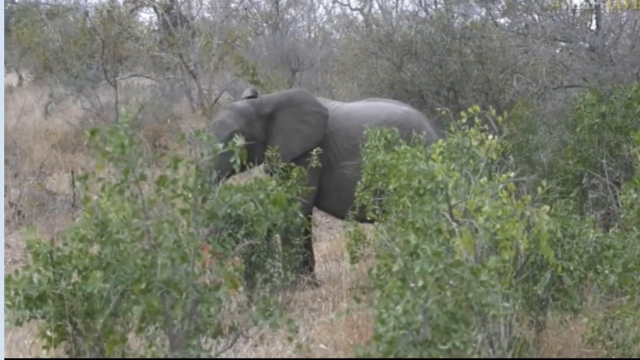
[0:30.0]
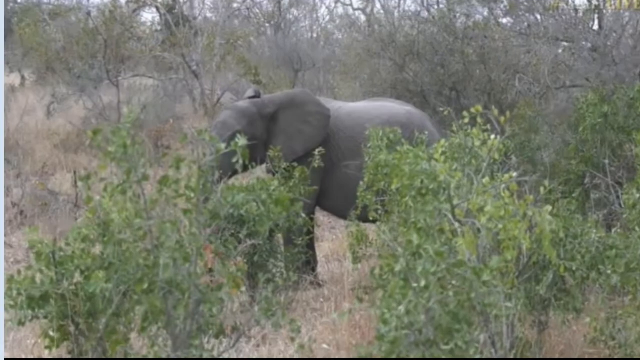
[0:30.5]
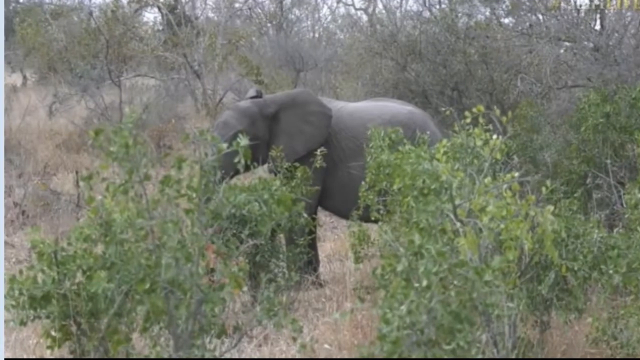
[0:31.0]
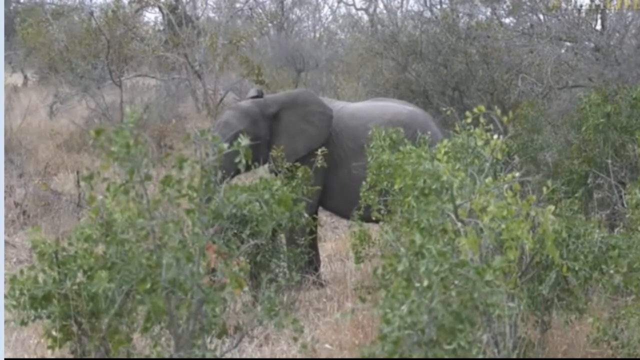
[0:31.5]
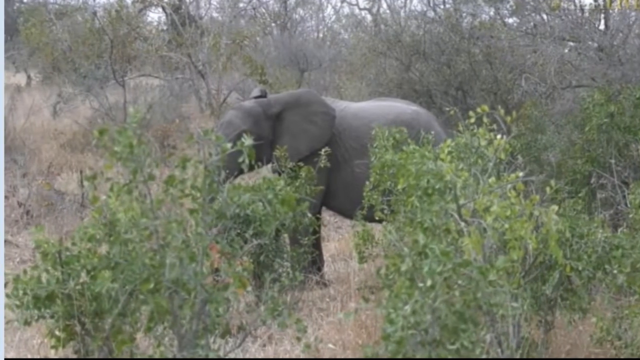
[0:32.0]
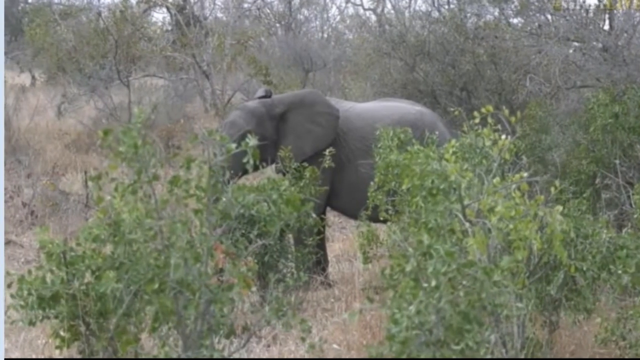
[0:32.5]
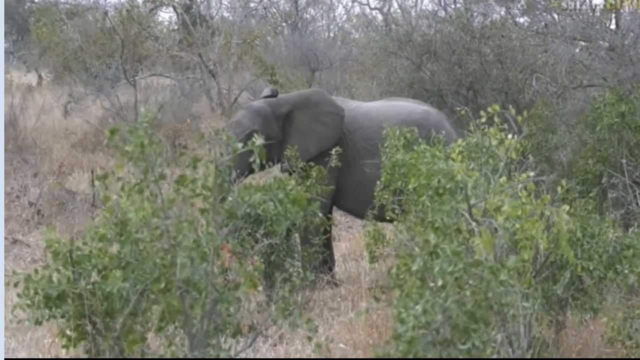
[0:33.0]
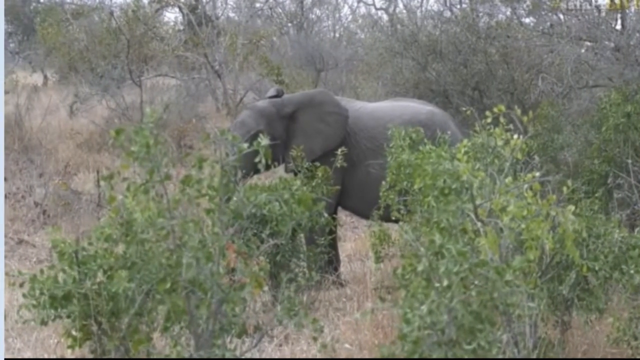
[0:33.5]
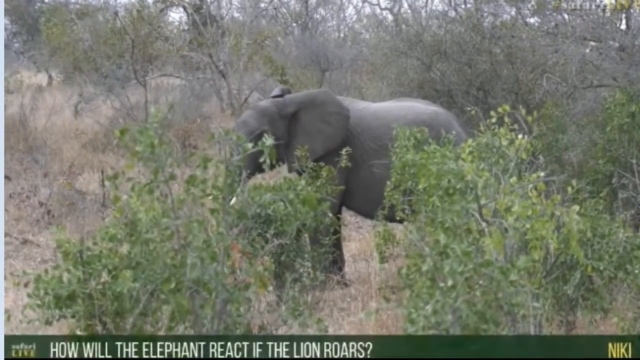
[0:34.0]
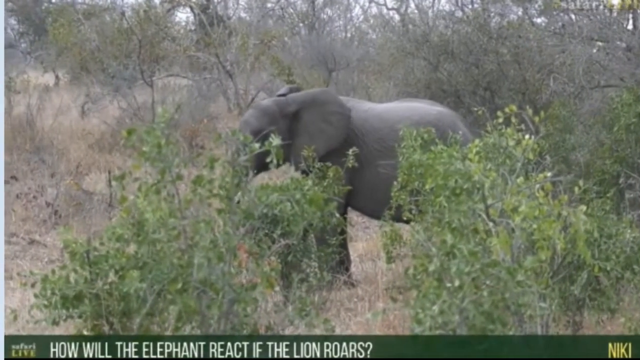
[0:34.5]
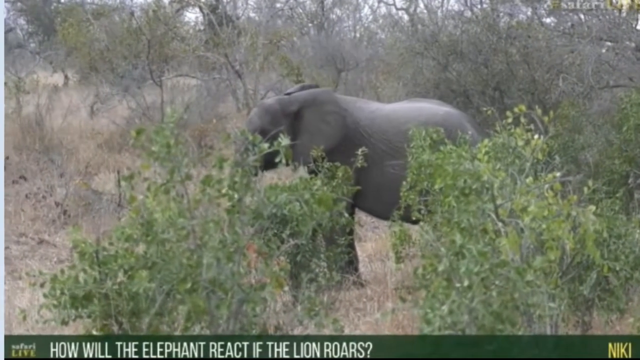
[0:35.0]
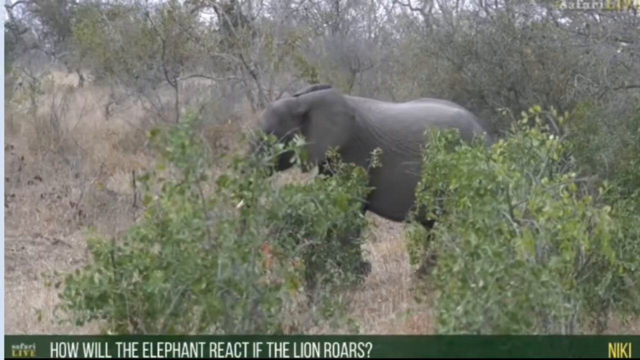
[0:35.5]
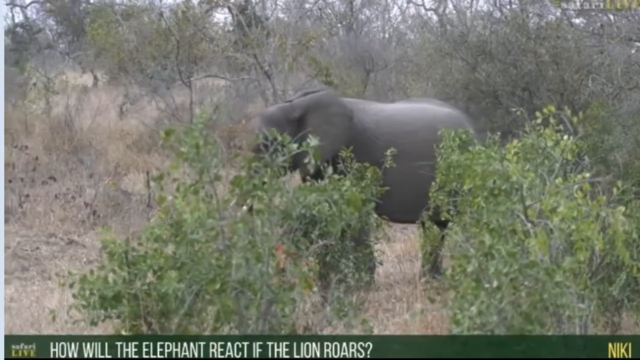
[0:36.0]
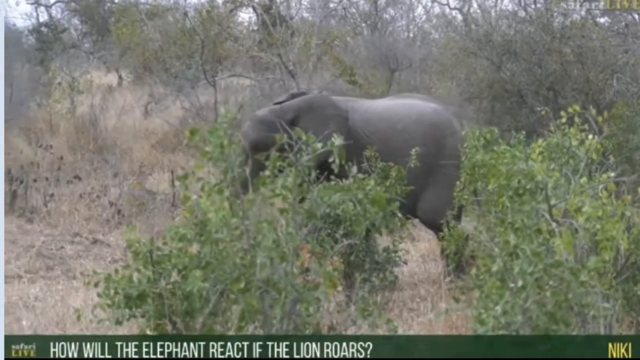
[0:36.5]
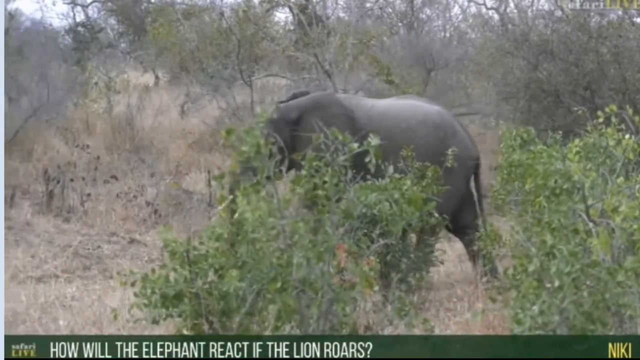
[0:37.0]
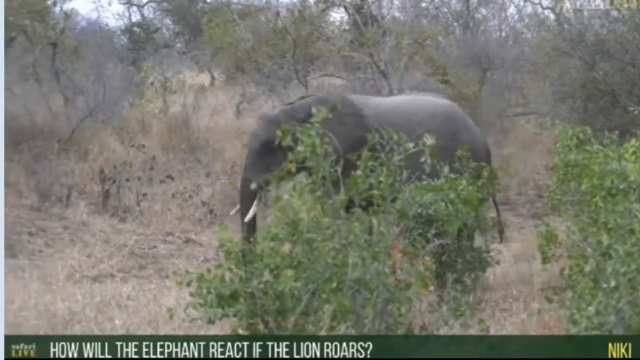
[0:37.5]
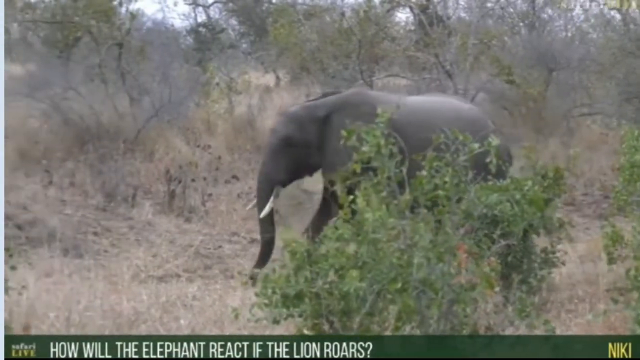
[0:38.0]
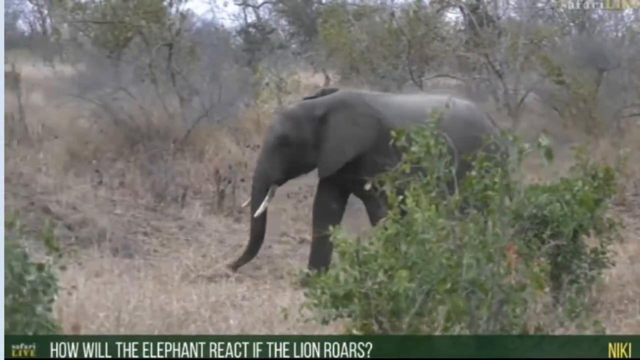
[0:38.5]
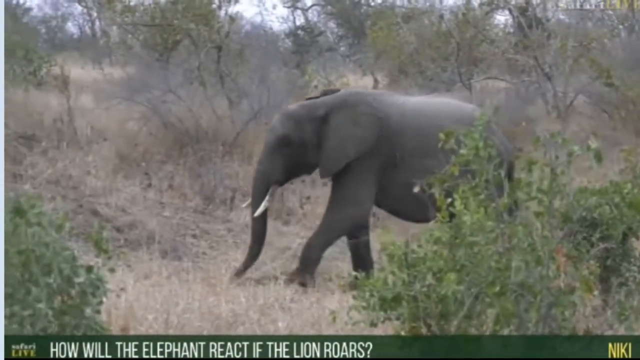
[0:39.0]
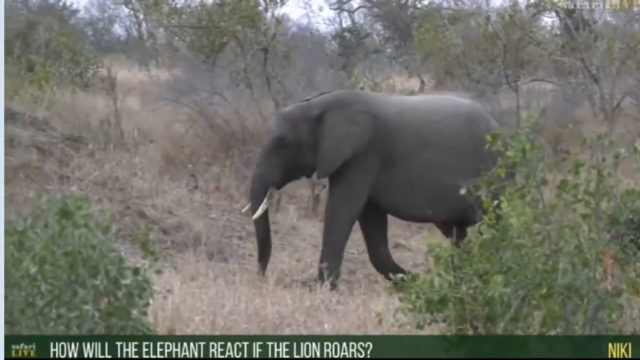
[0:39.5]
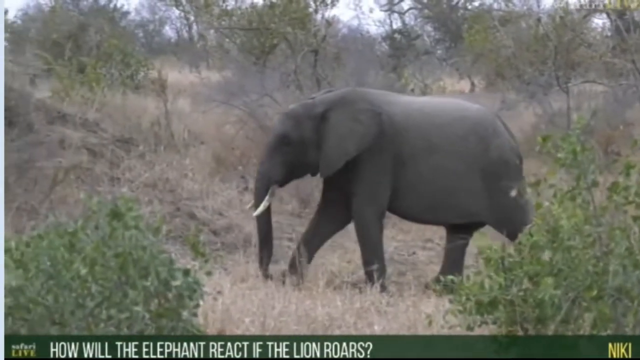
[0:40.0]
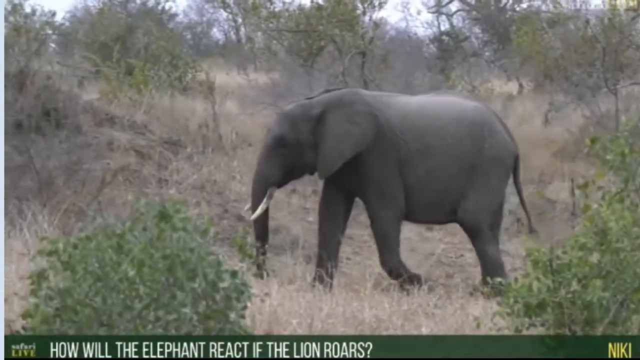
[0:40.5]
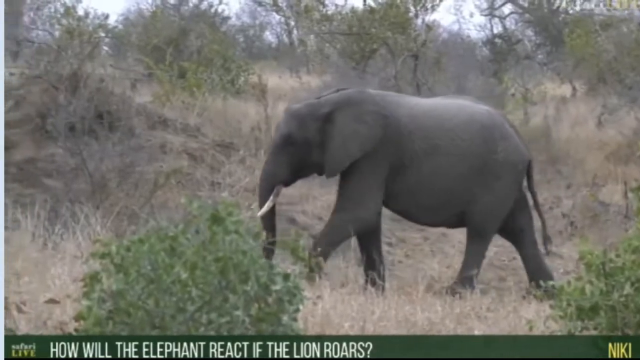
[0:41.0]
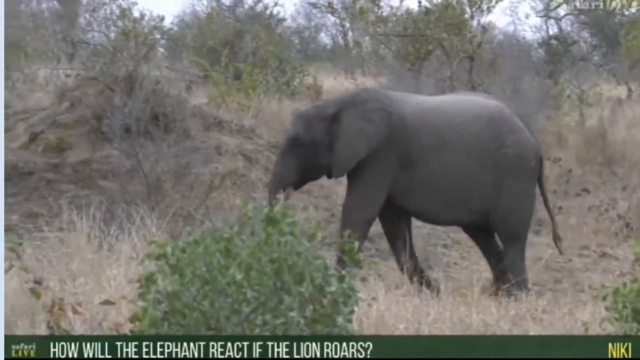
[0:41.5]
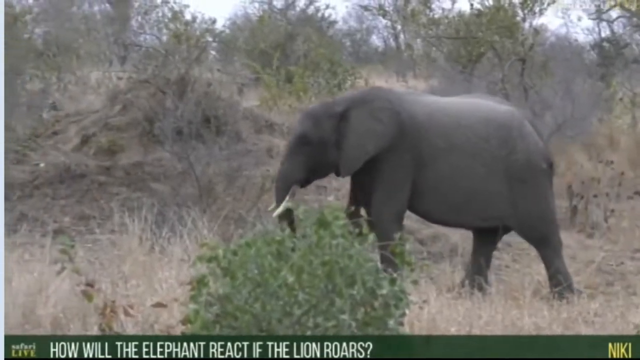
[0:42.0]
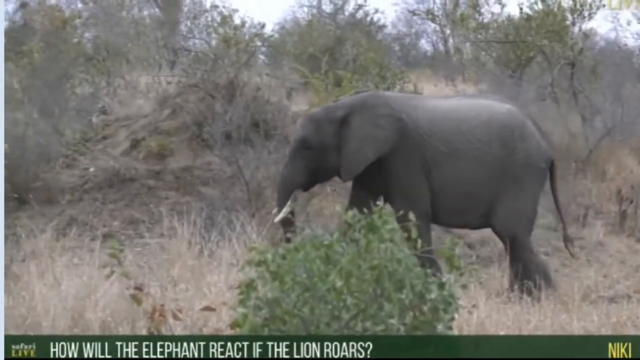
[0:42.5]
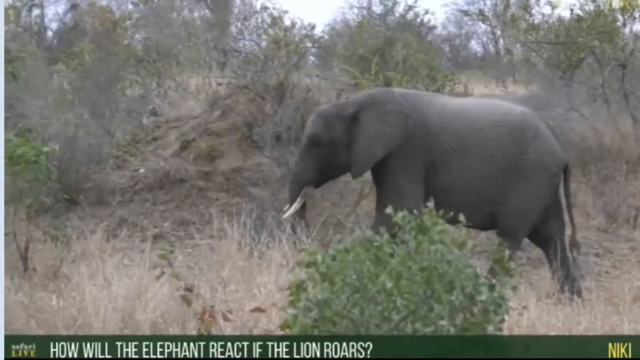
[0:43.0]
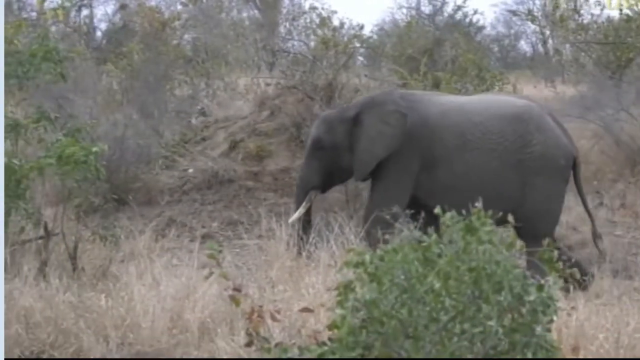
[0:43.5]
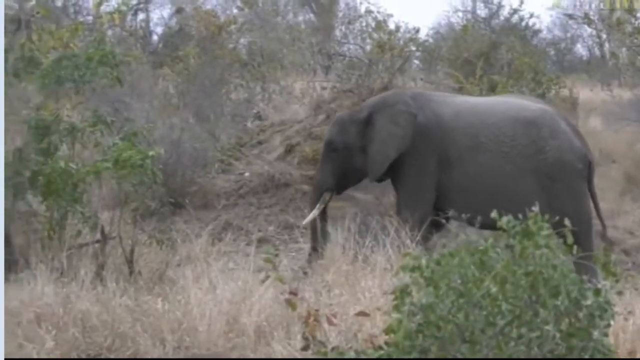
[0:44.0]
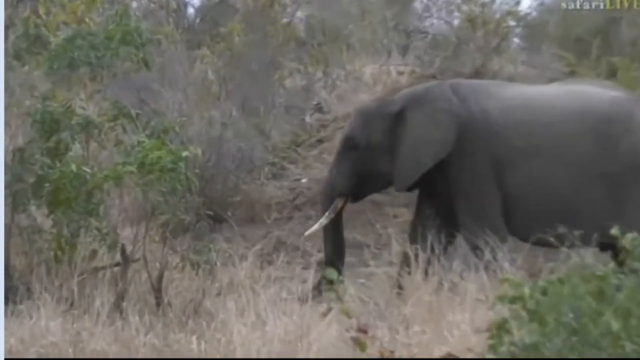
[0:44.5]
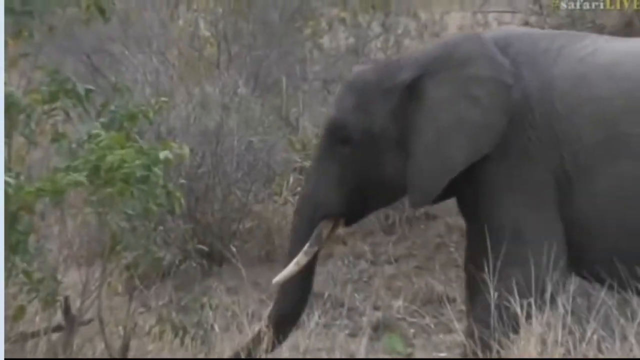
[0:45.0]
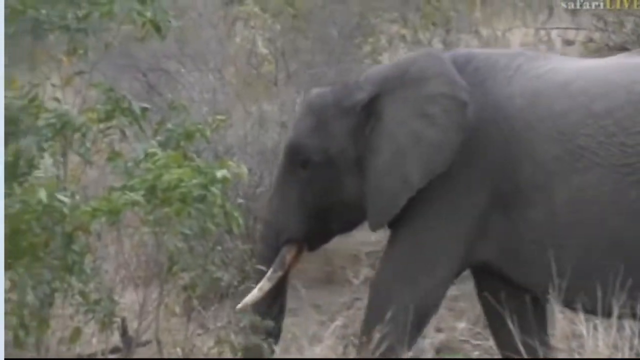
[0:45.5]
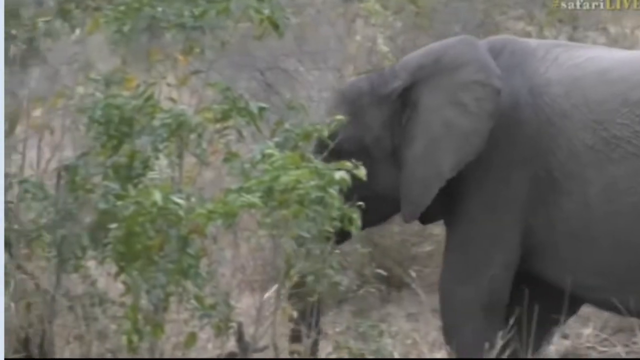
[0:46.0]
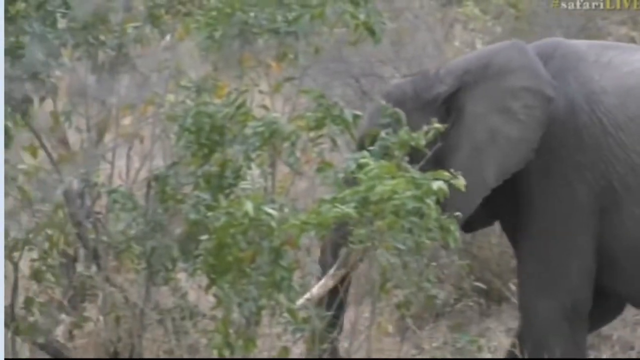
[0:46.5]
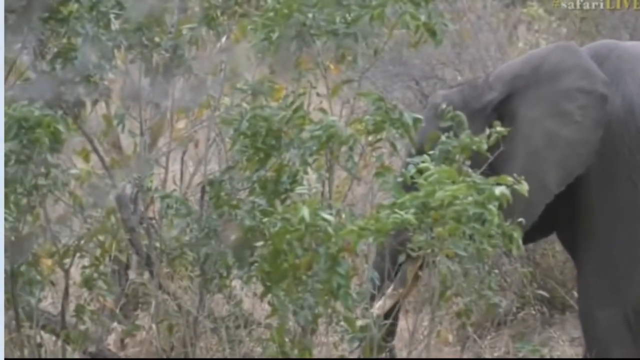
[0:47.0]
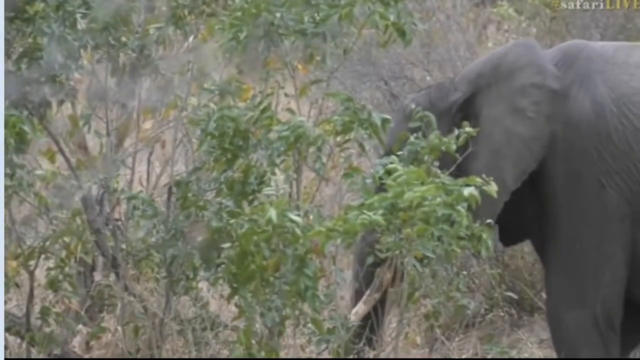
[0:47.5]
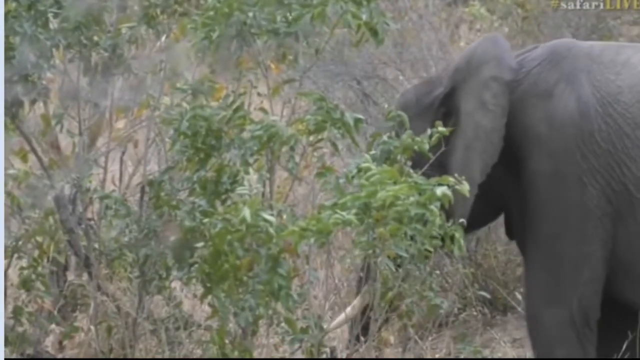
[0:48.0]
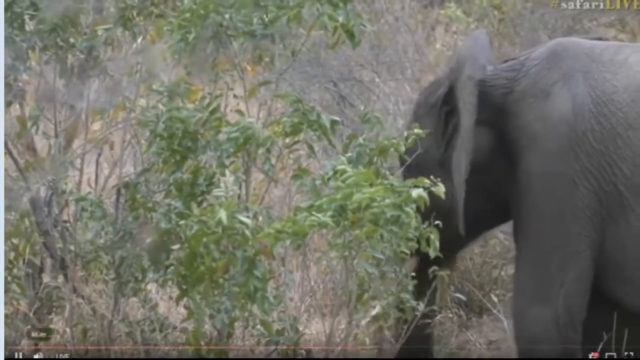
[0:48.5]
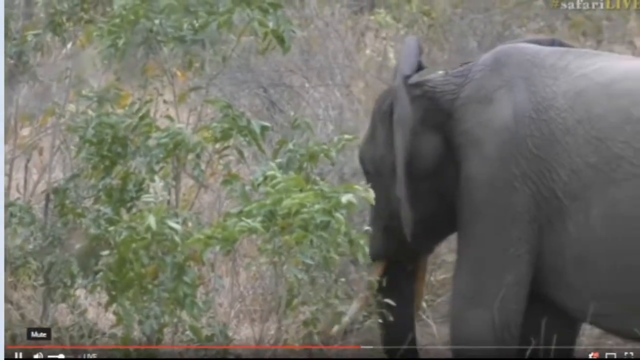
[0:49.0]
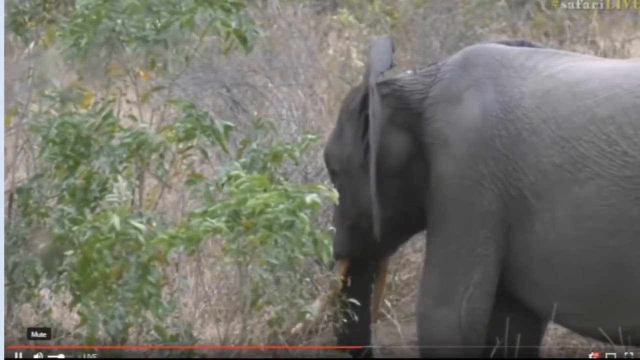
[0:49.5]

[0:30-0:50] A grey elephant is standing; it seems healthy, with good skin. It then starts to move forward until its whole body is visible, with some green bushes blocking part of the view, and it keeps moving forward. Text at the bottom reads "How will the elephant react if the lion roars?" in white on a dark green background. The elephant is in a bushy place where some trees behind it have fallen, while the trees in front of it are still green. Most of the trees are very dry, and the grass is also very dry, with the dryness showing mostly in the background, though some trees have a little green in their leaves.